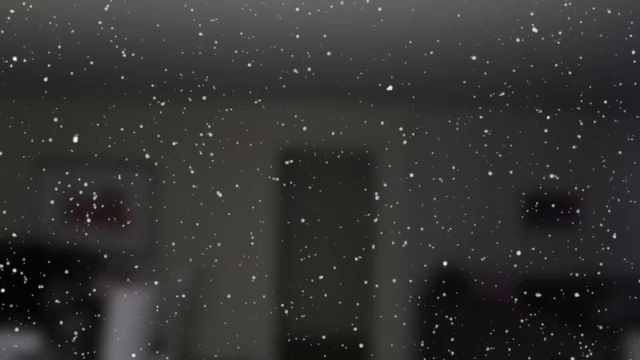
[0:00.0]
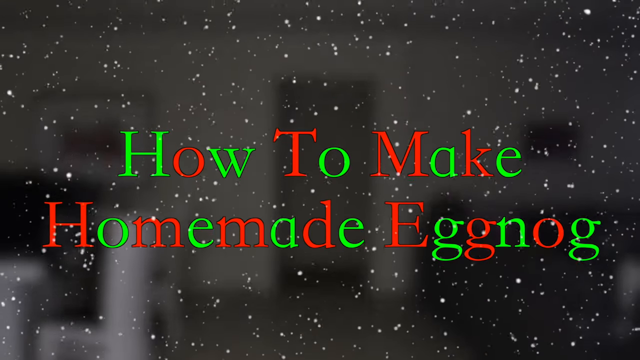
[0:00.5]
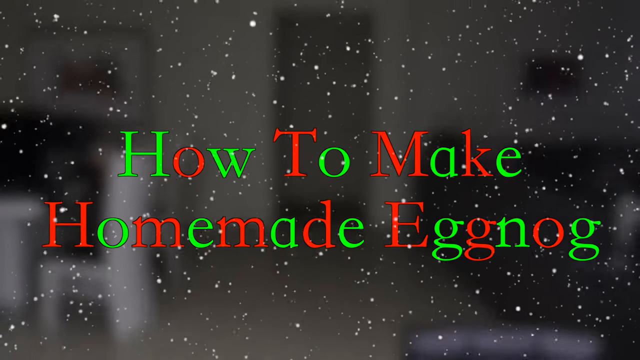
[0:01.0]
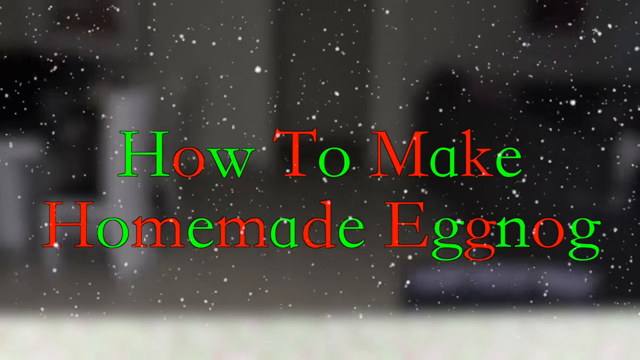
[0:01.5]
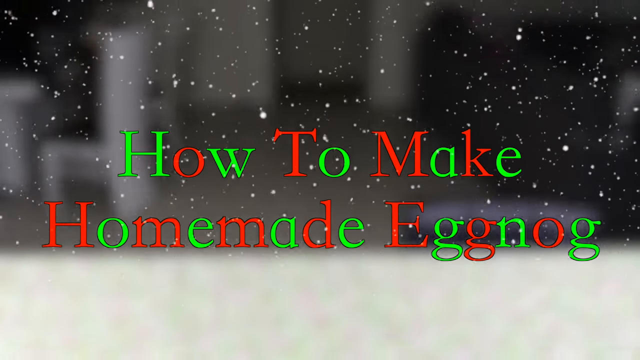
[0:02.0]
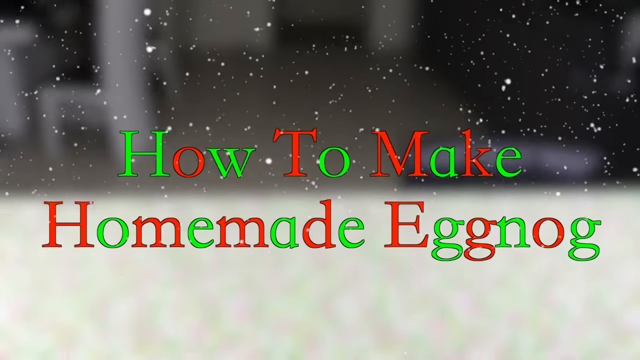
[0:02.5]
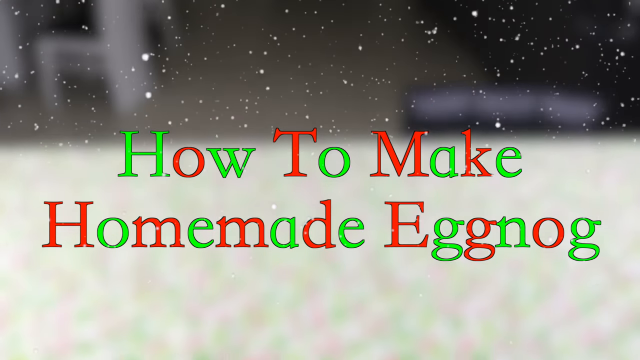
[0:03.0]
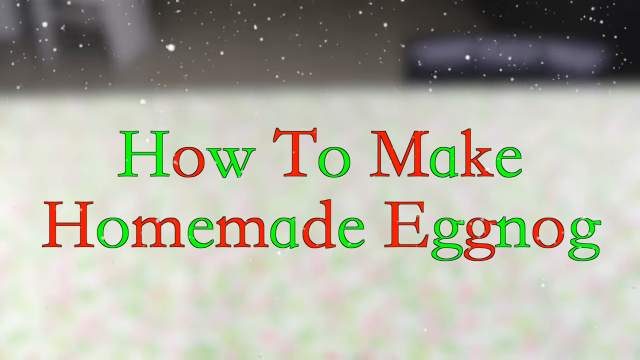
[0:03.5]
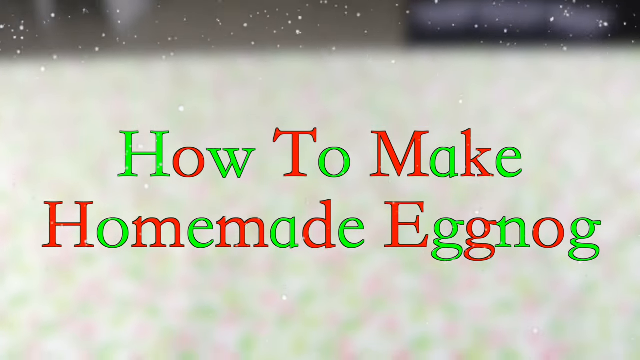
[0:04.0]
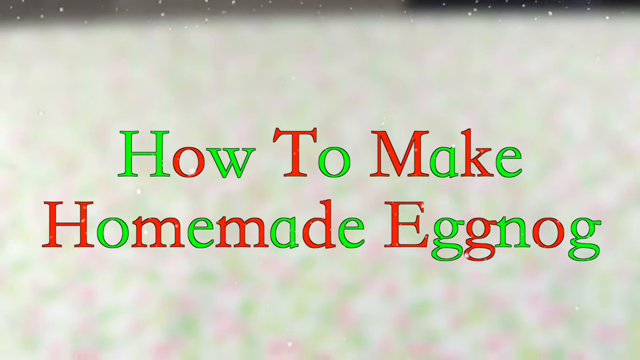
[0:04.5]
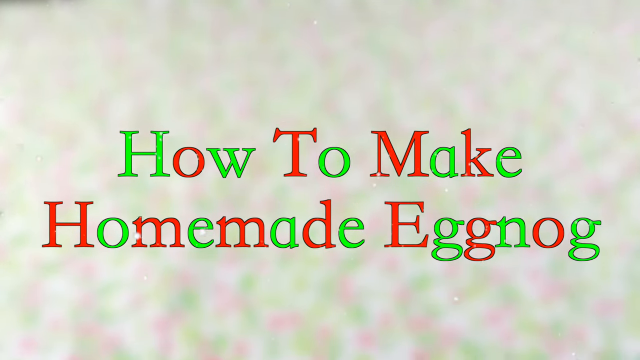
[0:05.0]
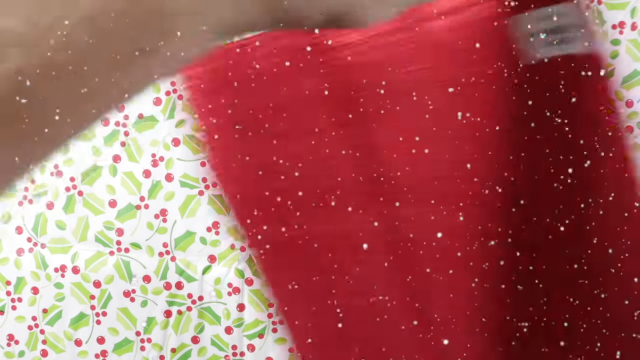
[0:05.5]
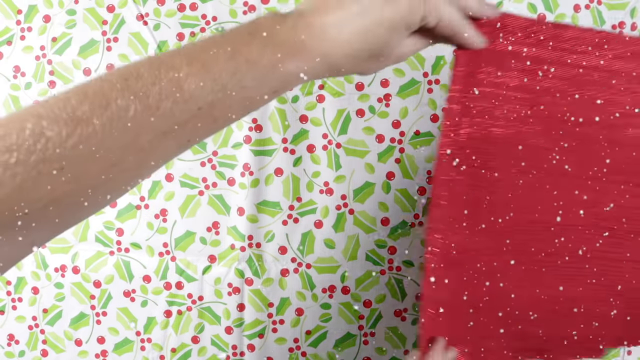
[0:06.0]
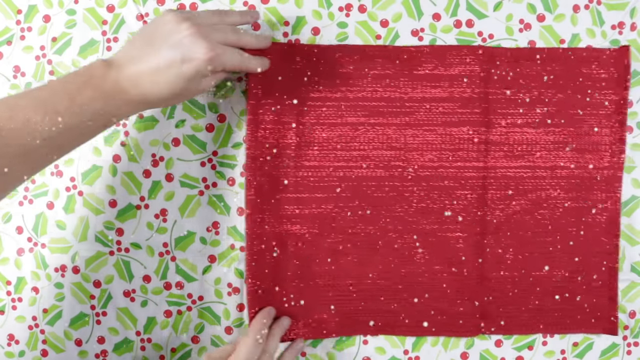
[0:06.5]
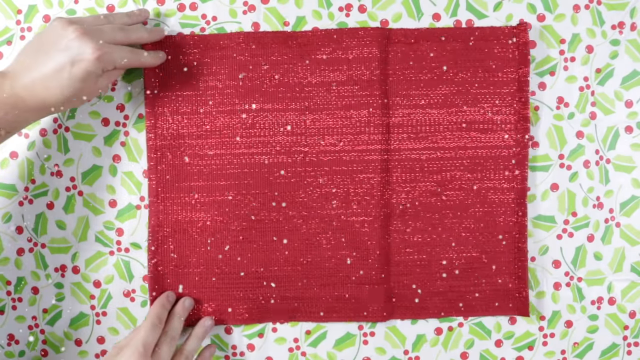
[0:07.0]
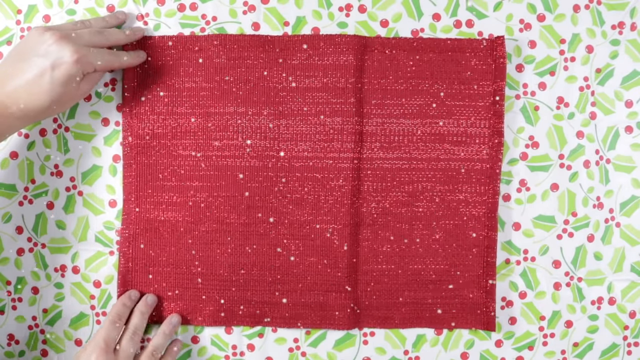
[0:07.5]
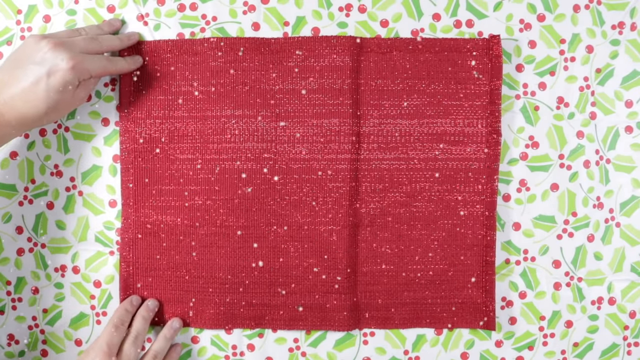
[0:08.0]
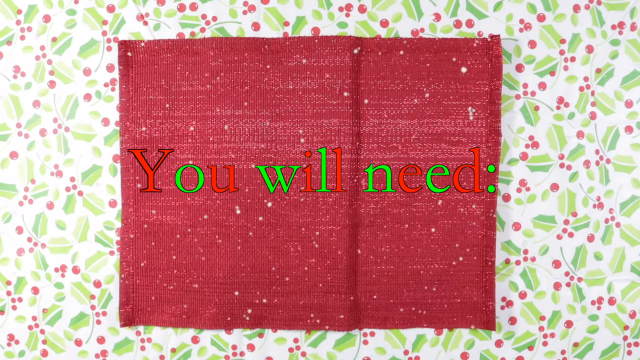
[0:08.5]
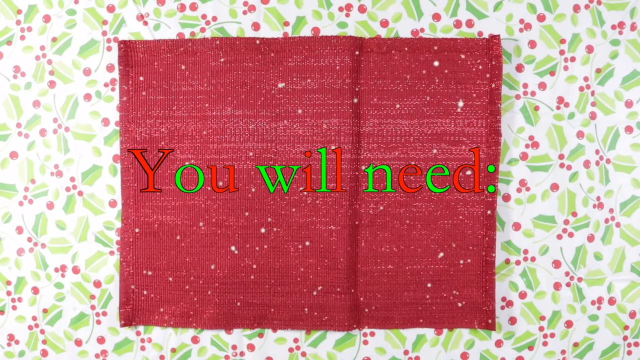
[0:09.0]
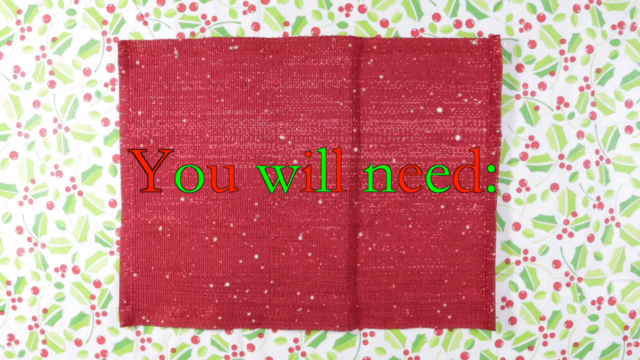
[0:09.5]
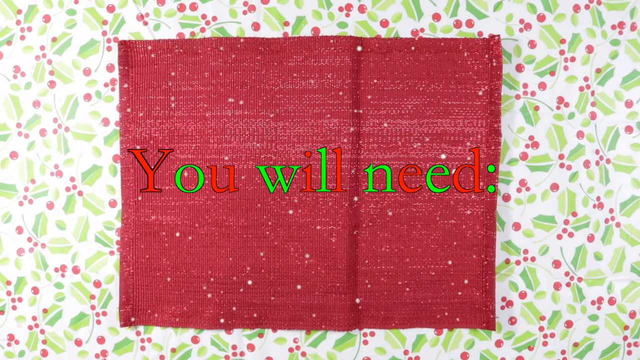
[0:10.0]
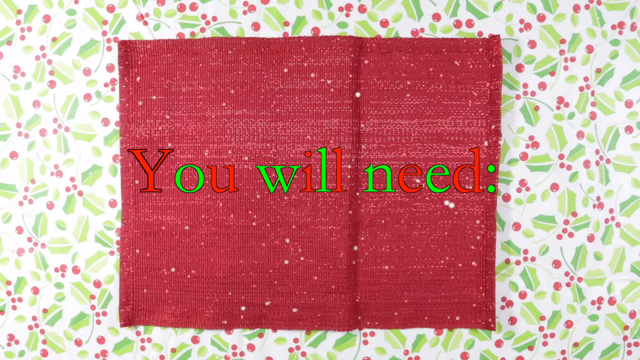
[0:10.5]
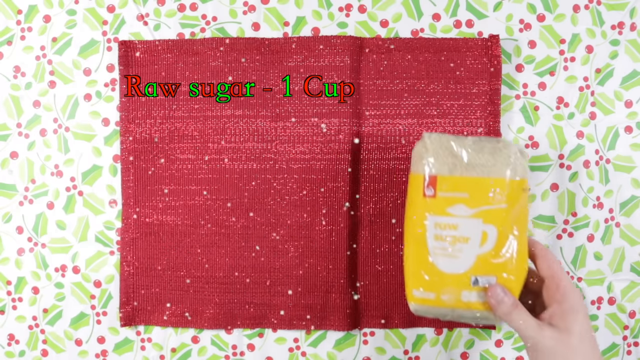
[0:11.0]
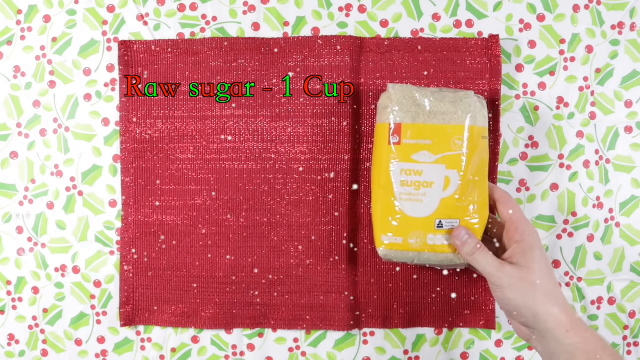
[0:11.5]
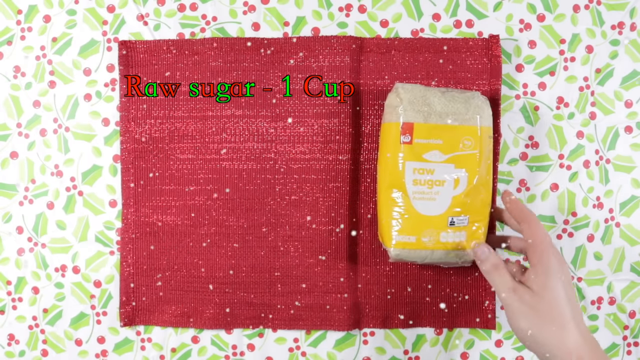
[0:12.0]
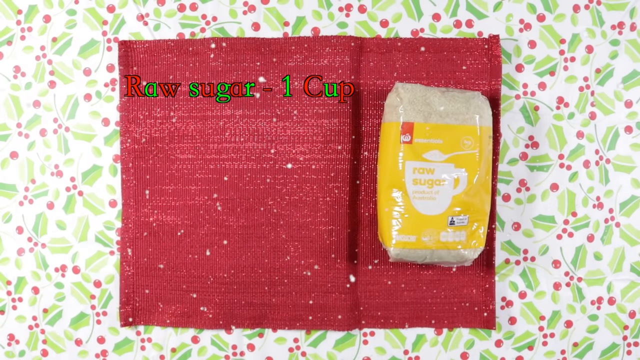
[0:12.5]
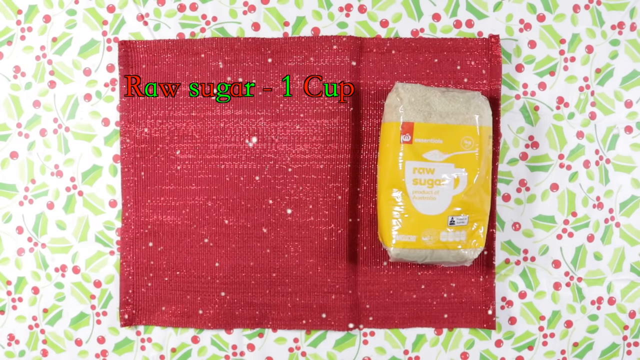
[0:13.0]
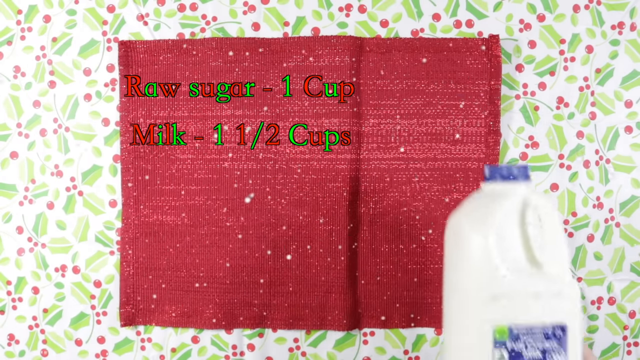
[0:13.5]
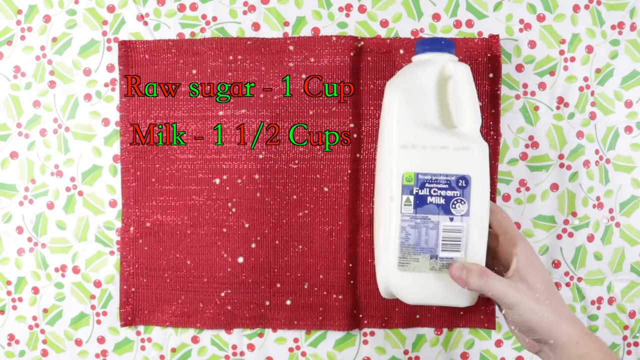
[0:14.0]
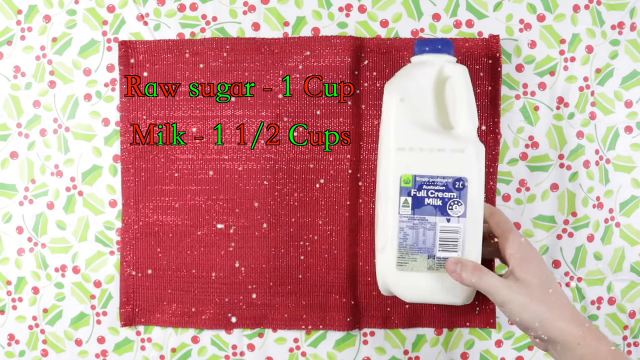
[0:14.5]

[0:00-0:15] Falling snow, blurred out, appears in the background as the title "How to Make Homemade Eggnog" is shown in alternating red and green. The snow continues to fall as the camera pans to a table, which comes into focus. A person, of whom only the arms and hands are shown, lays out a mat and gradually settles it onto the table. The words "the words you will need" appear over the mat in the same multicolored font. The person lays down sugar on the mat and then milk. An ingredient list begins on the left side, listing "1 cup of raw sugar" and "one and a half cups of milk" as the milk drops.